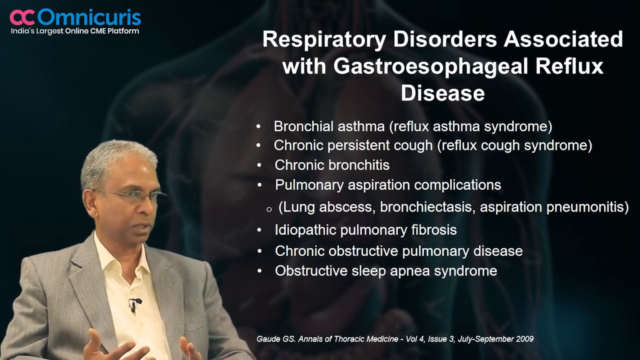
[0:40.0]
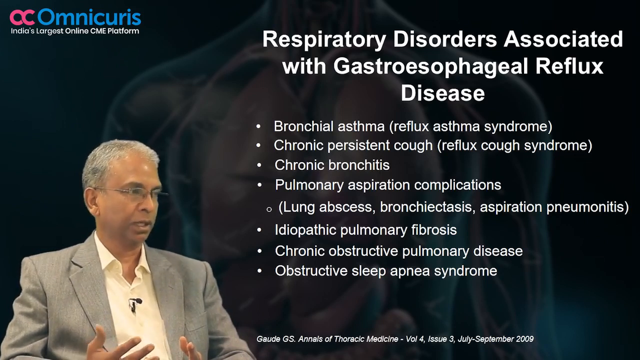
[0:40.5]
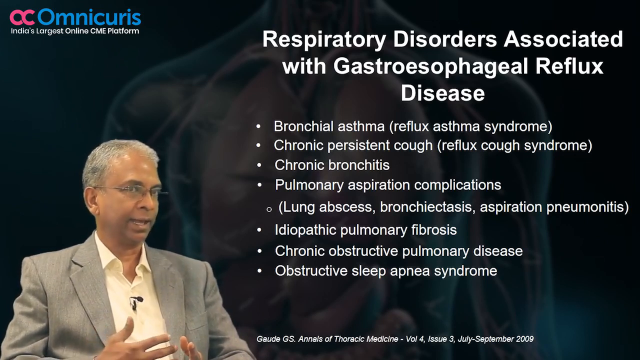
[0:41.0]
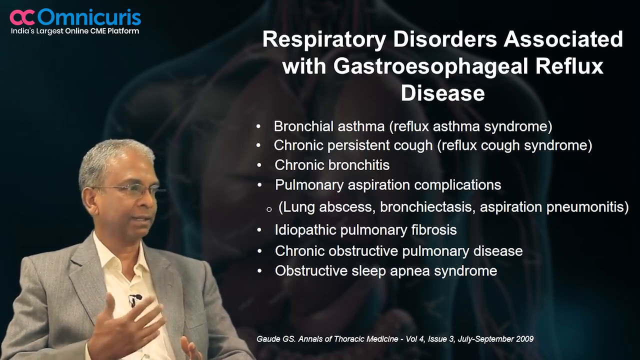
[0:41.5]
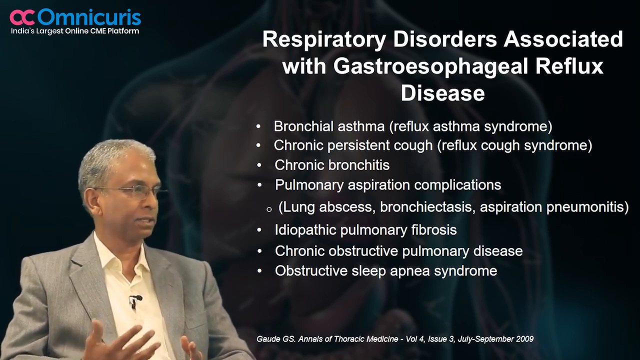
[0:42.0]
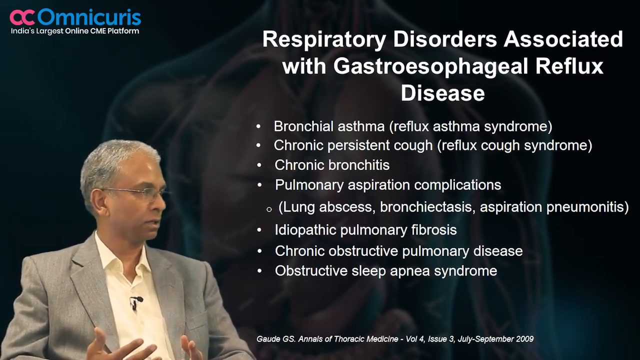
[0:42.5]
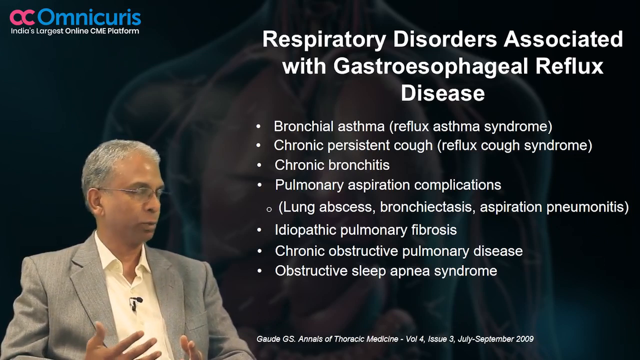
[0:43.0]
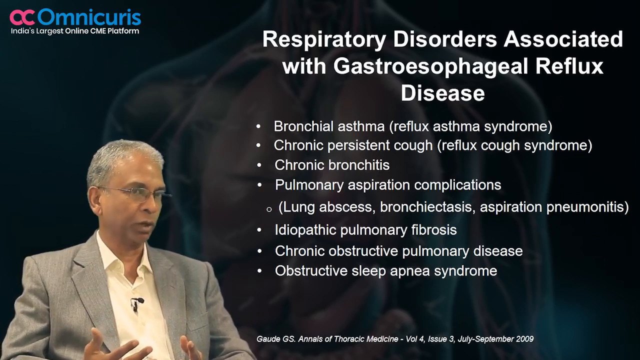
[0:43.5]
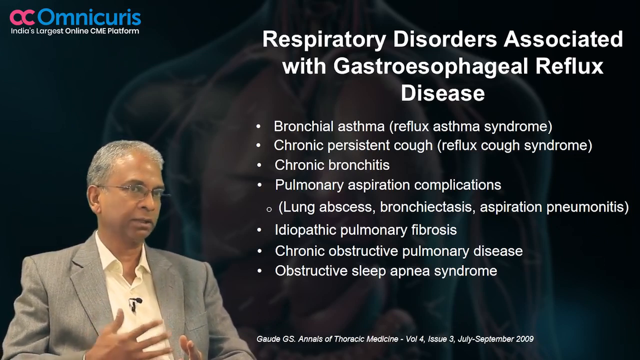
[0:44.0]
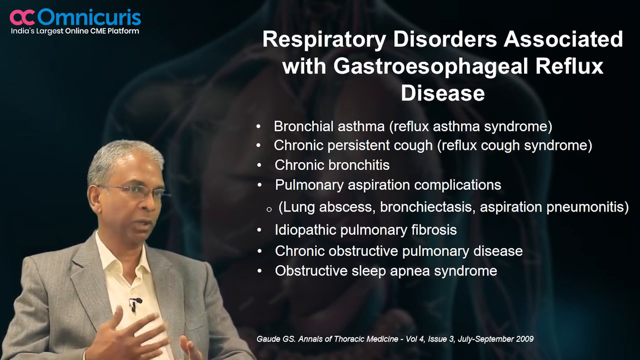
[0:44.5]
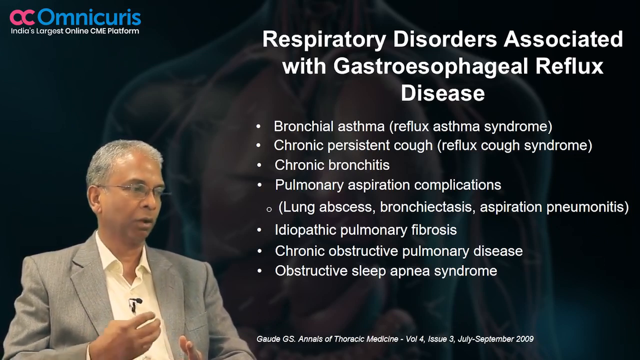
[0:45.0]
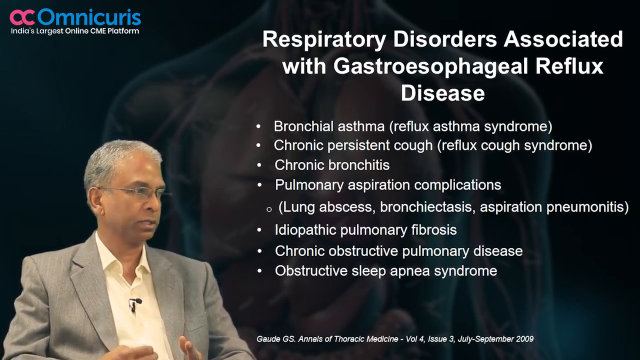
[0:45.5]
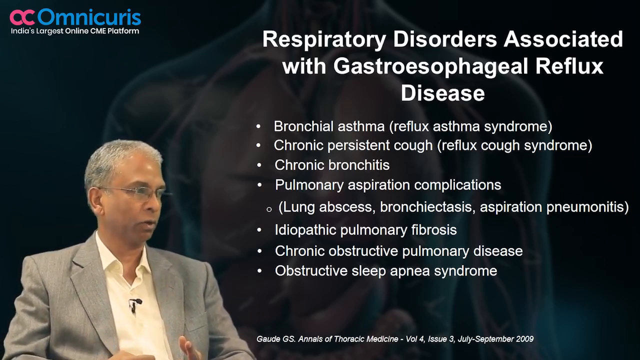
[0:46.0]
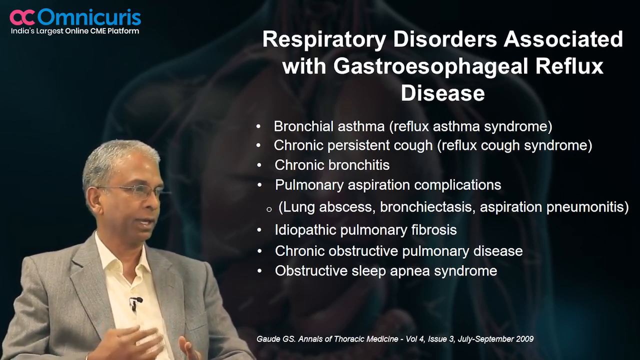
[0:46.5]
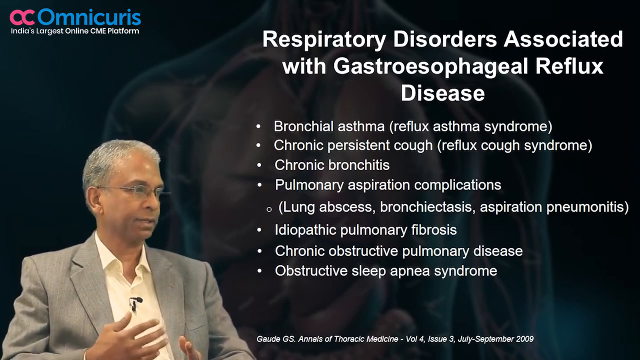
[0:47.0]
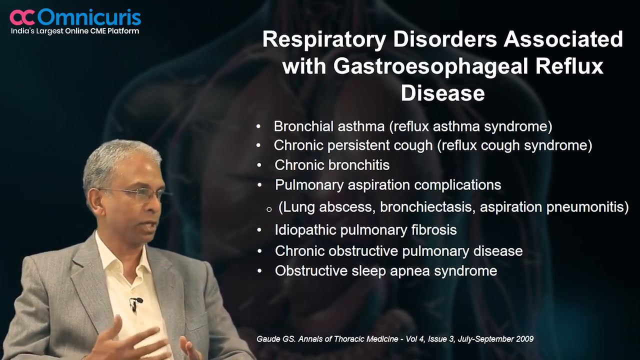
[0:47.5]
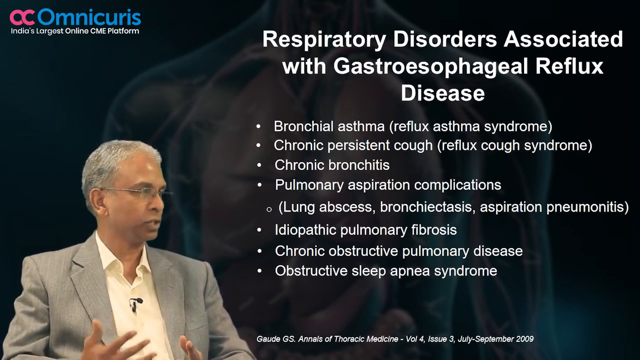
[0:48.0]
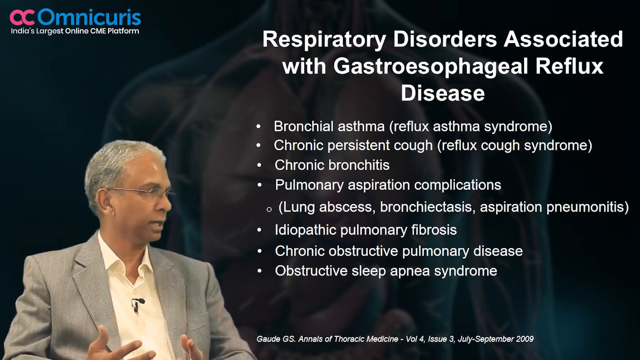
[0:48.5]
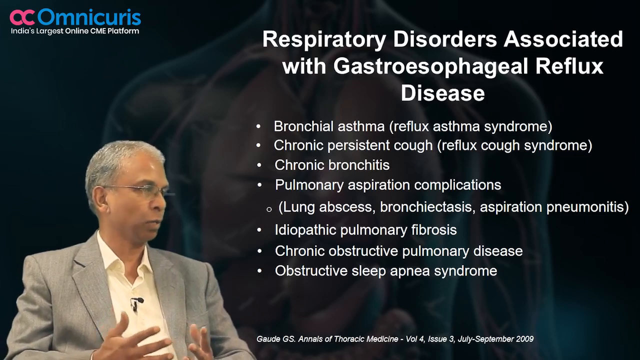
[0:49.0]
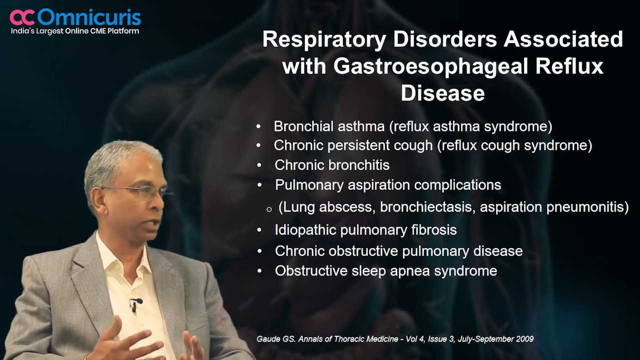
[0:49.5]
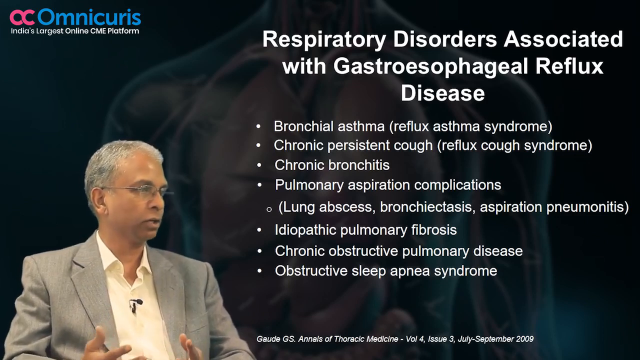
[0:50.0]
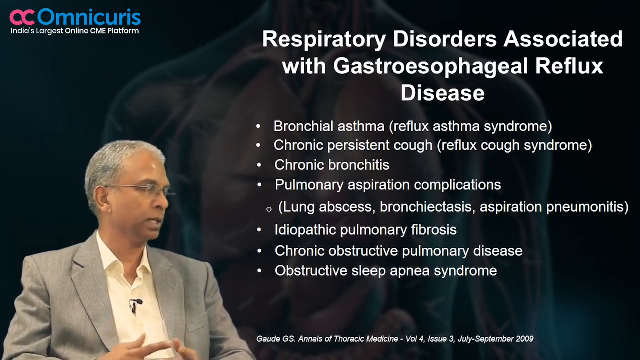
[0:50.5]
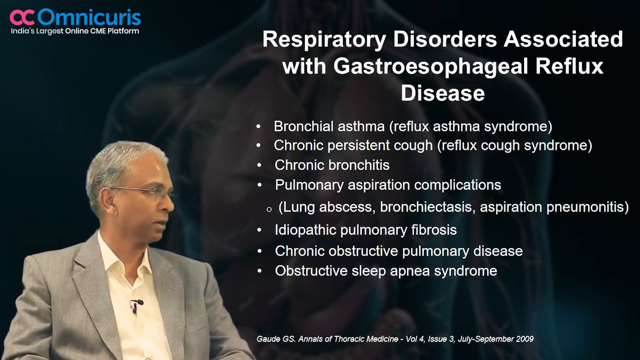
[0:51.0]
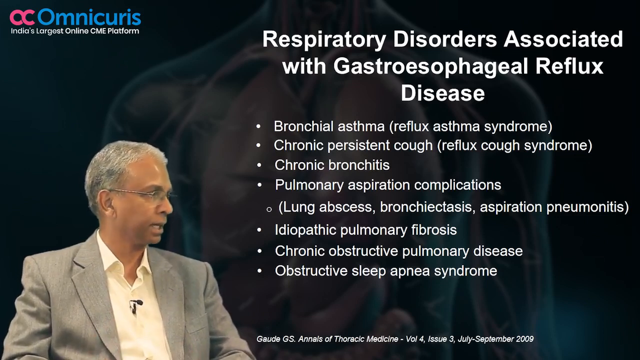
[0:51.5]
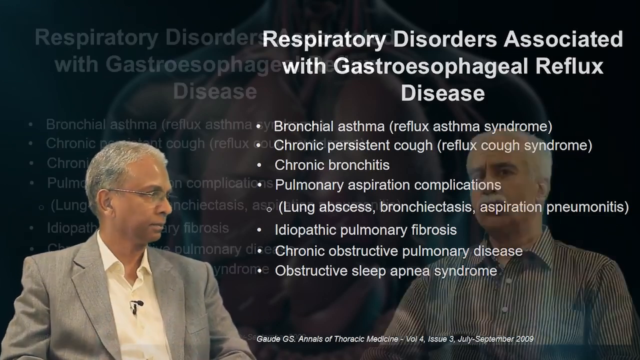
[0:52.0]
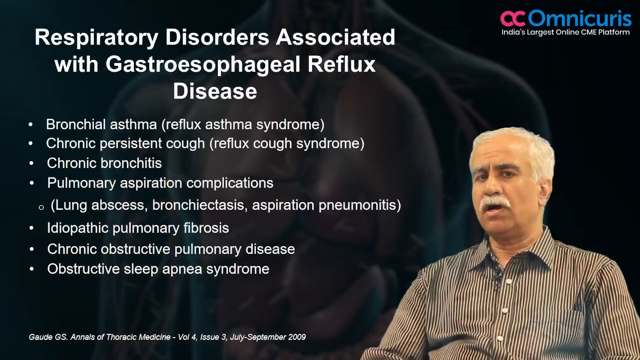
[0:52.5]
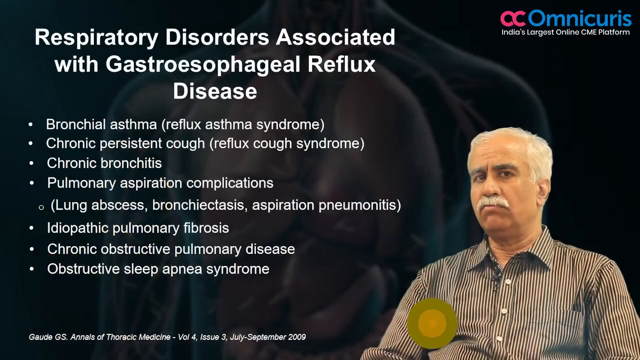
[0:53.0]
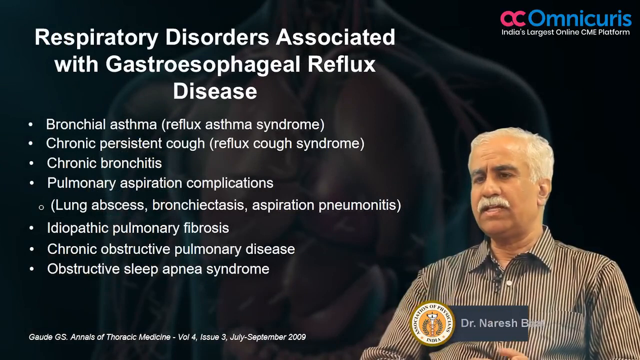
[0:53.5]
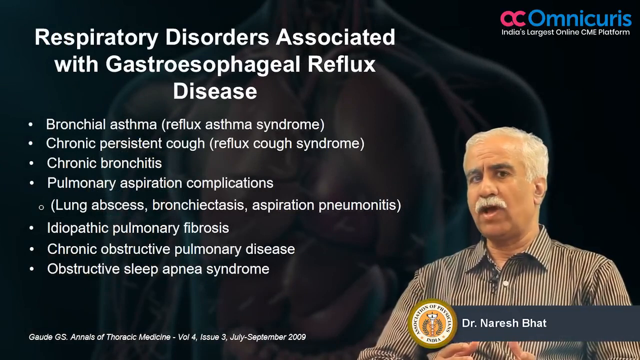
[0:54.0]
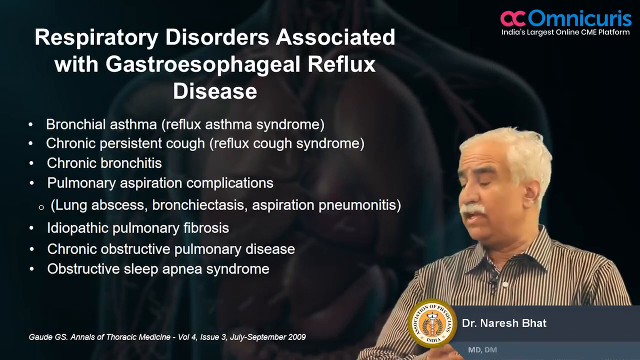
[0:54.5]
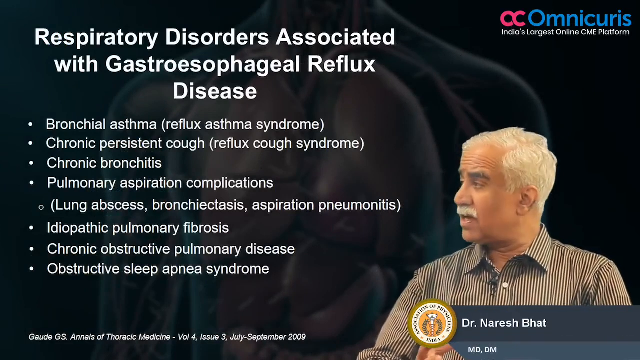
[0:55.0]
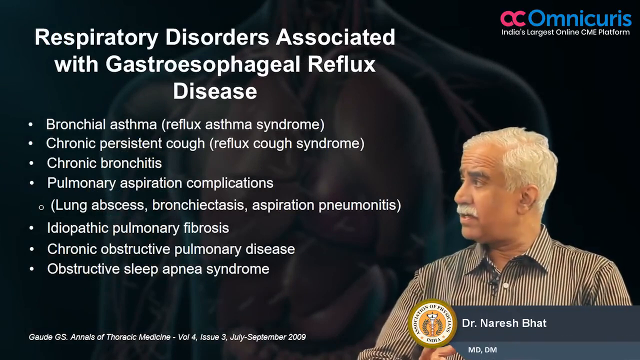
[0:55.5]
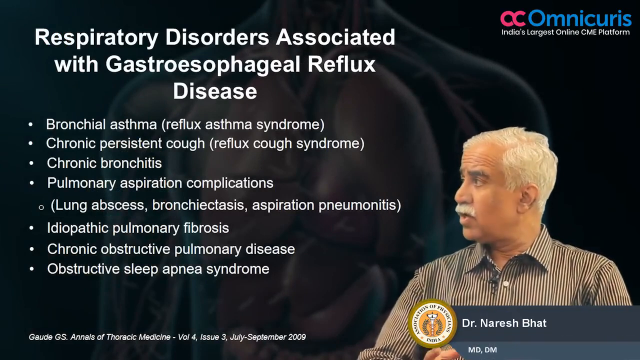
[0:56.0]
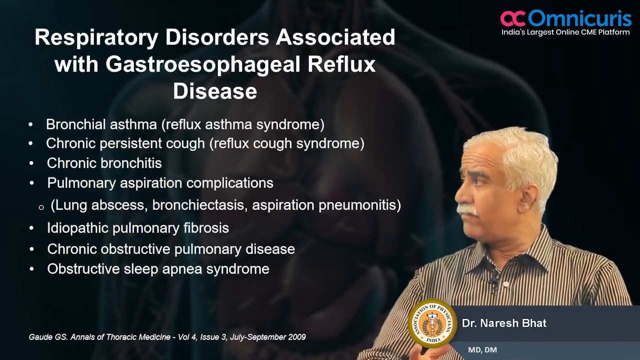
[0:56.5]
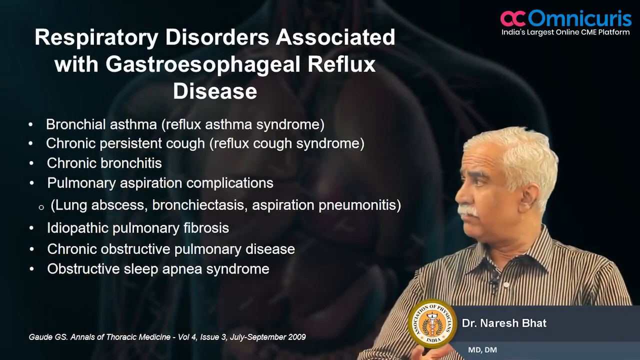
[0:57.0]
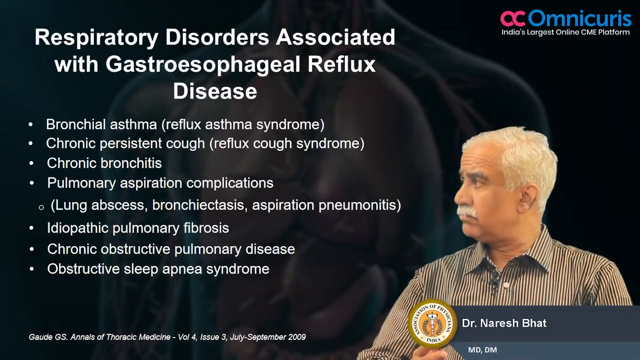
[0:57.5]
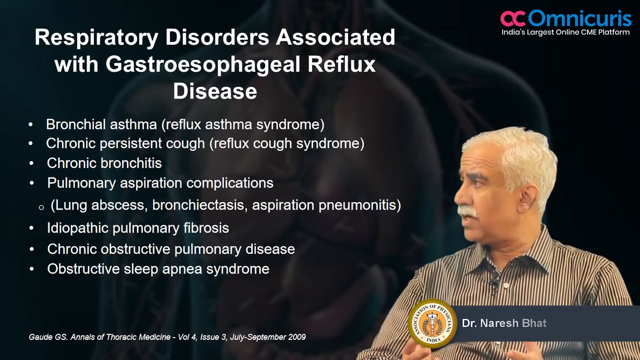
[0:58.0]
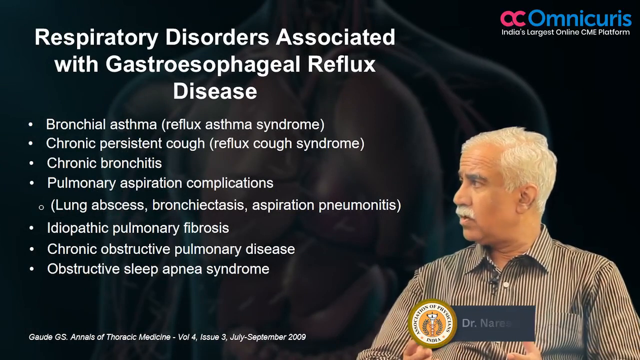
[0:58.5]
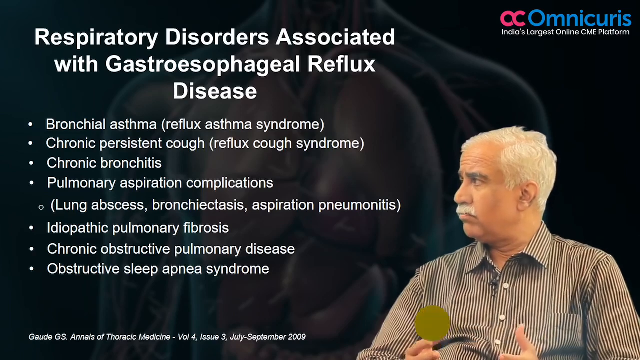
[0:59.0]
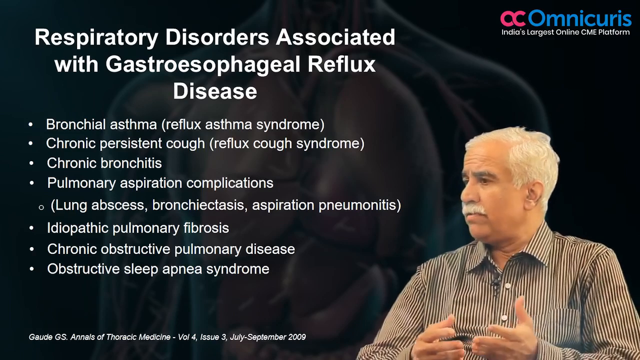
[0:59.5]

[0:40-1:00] The same text remains on screen while the doctor talks about it: the list of respiratory disorders associated with gastroesophageal reflux disease, "bronchial asthma, reflux asthma syndrome, chronic persistent cough, reflux cough syndrome, chronic bronchitis, pulmonary aspiration complications, lung abscess, bronchistasis, aspiration pneumatitis, idiopathic pulmonary fibrosis, chronic obstructive pulmonary disease, obstructive sleep apnea syndrome". The "O.C. Omnicurus, India's largest online CME platform" logo is now on the right-hand side at the top of the video. Dr. Naresh Bhat is in the frame, talking about all of these things.